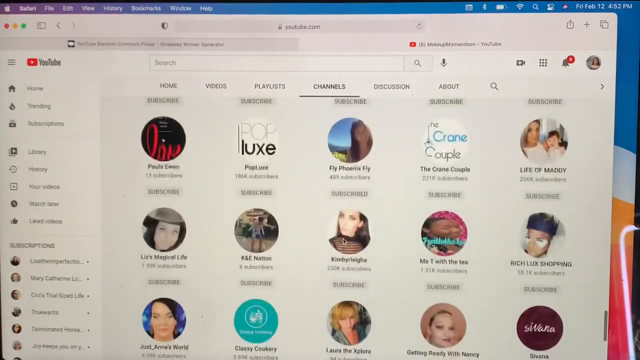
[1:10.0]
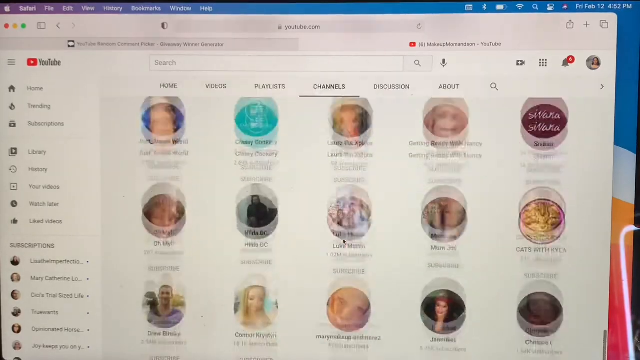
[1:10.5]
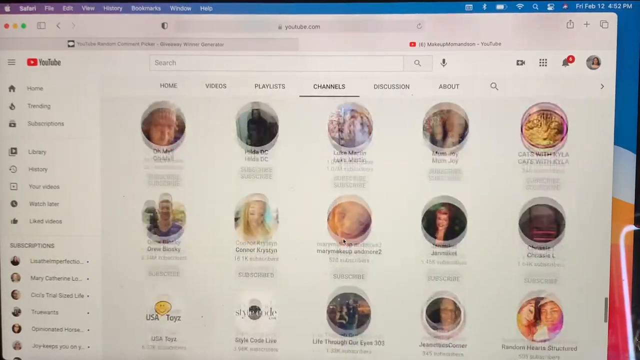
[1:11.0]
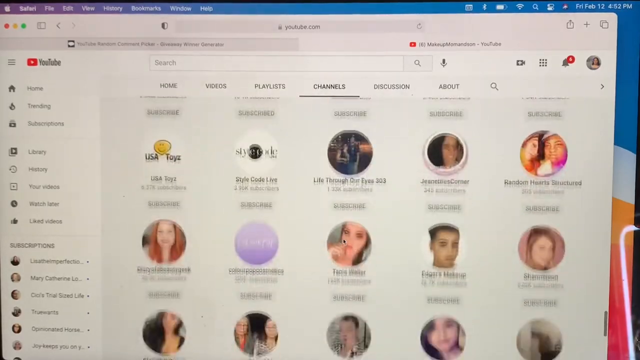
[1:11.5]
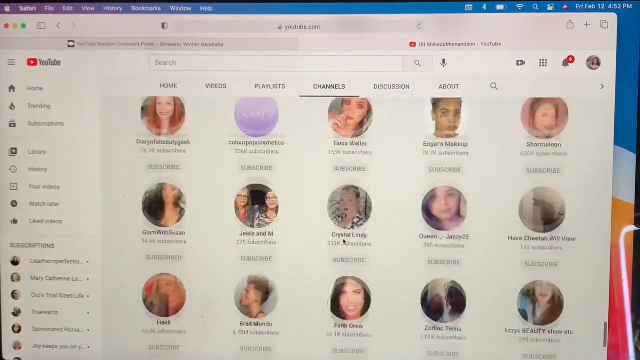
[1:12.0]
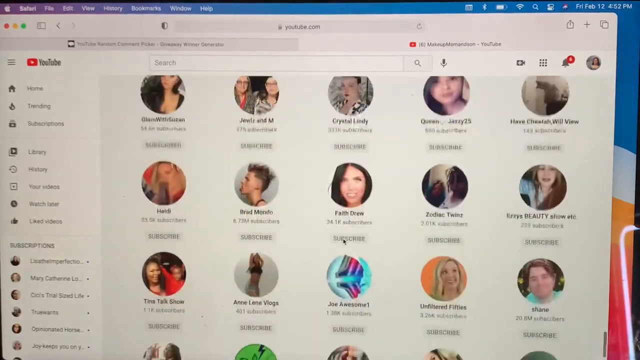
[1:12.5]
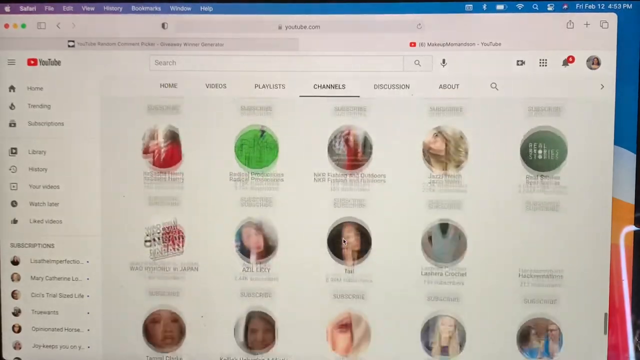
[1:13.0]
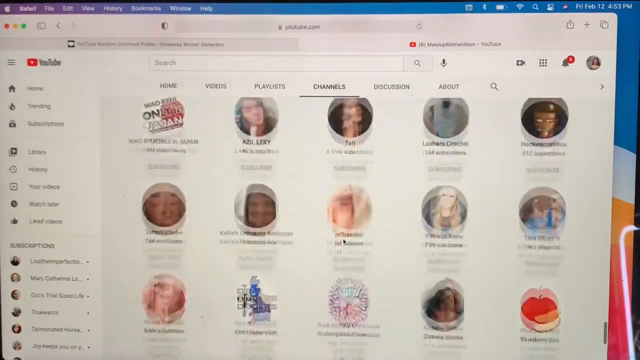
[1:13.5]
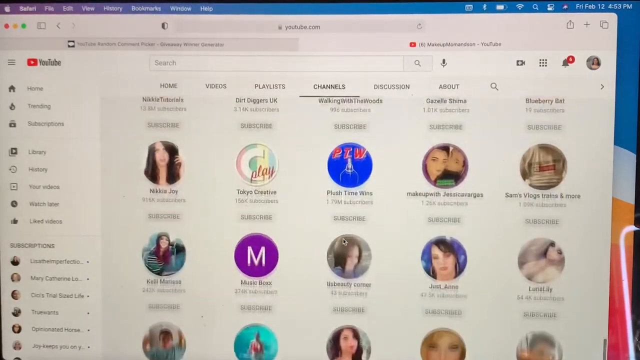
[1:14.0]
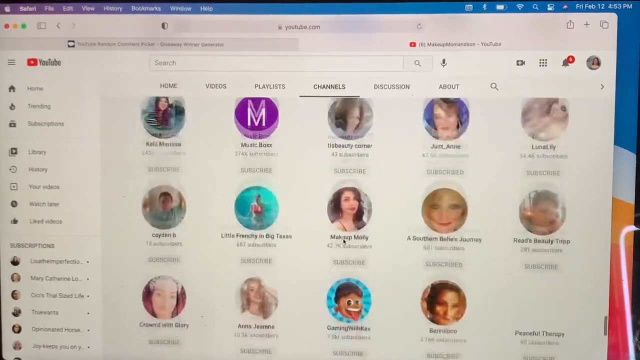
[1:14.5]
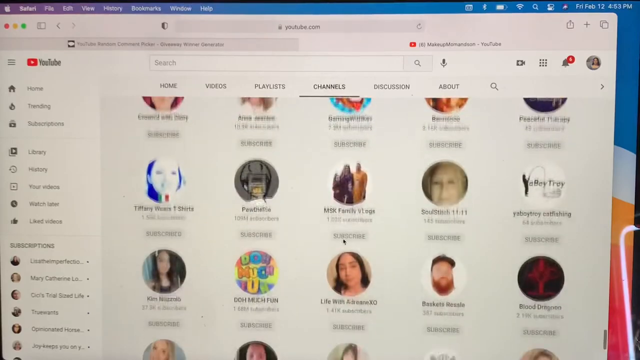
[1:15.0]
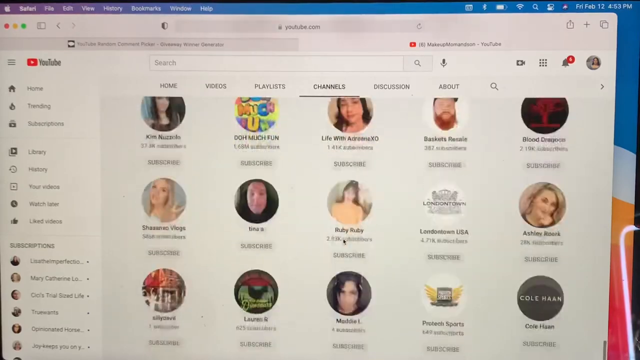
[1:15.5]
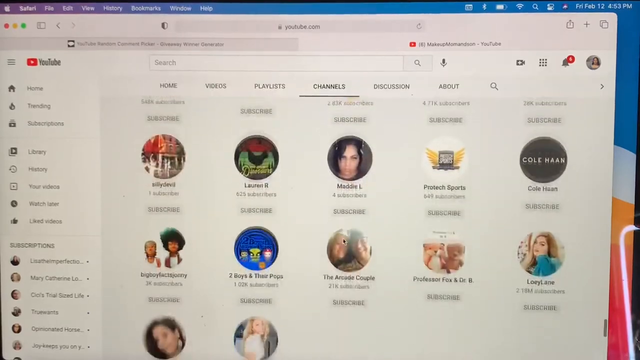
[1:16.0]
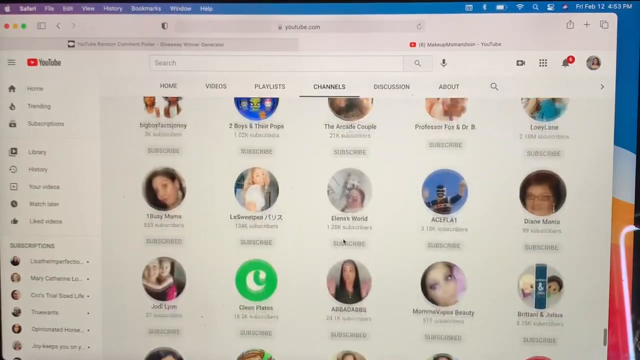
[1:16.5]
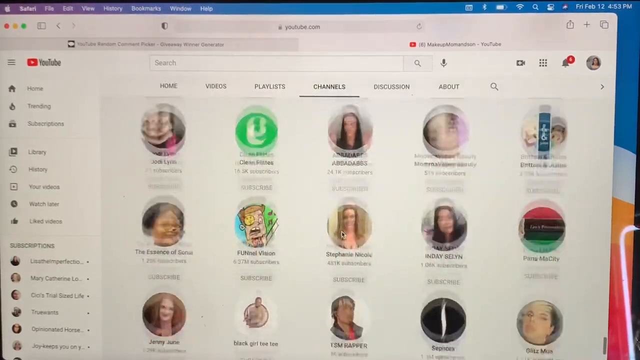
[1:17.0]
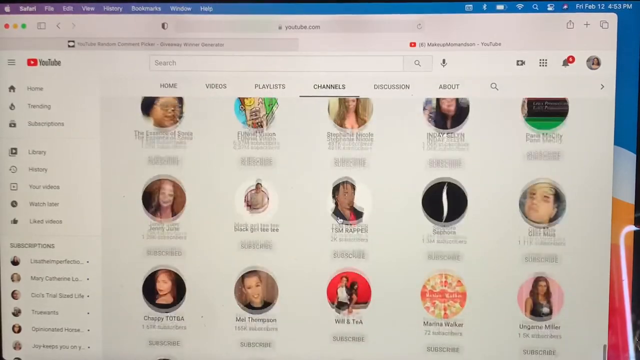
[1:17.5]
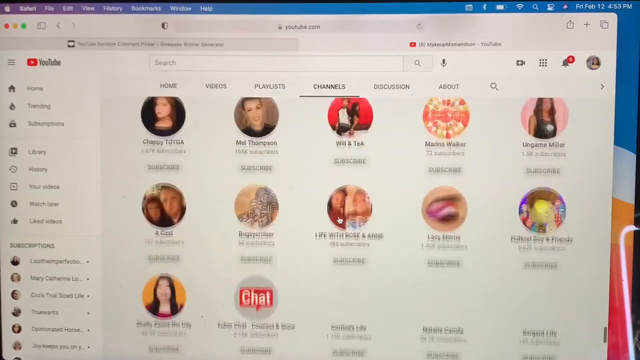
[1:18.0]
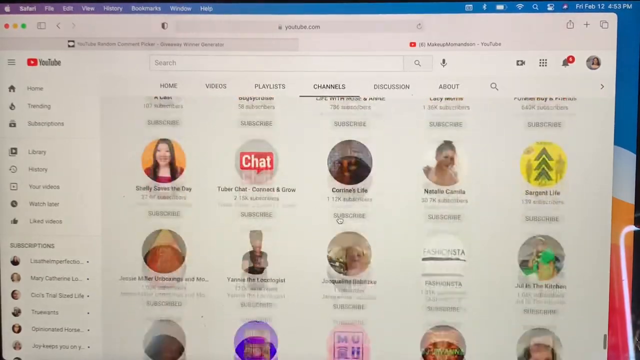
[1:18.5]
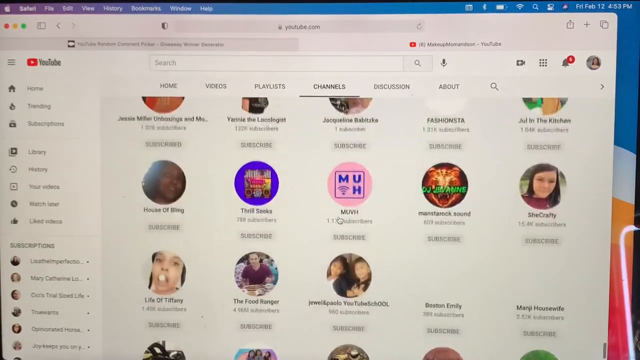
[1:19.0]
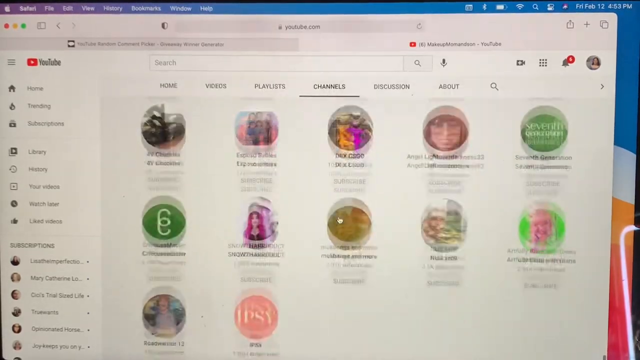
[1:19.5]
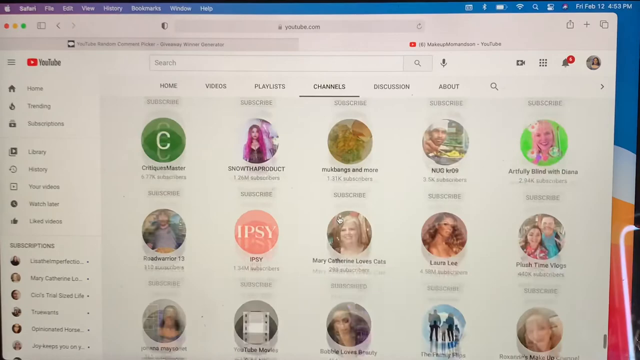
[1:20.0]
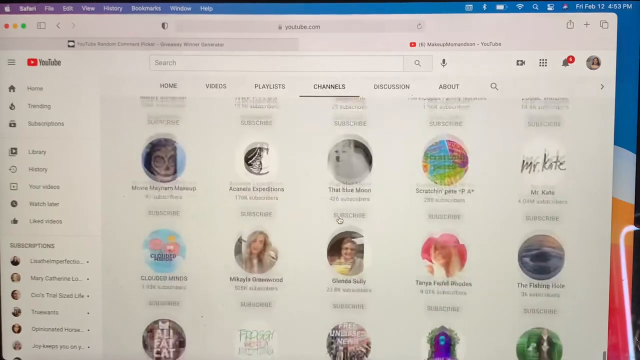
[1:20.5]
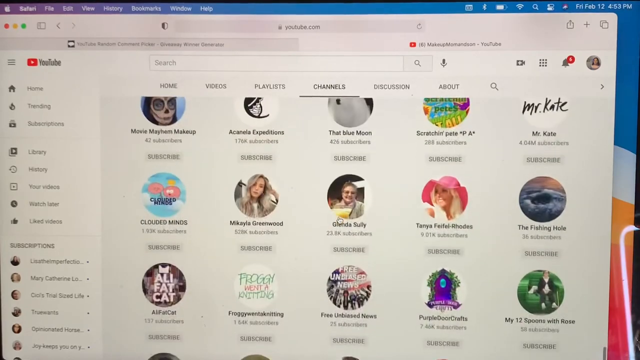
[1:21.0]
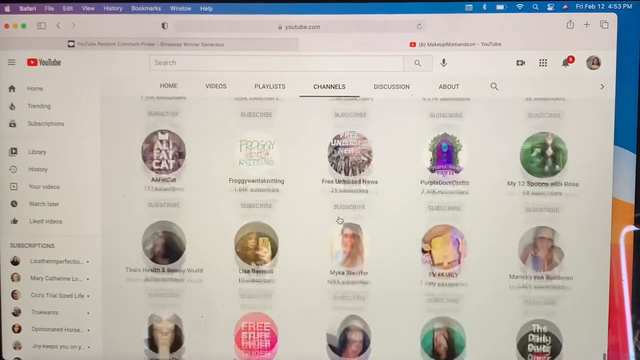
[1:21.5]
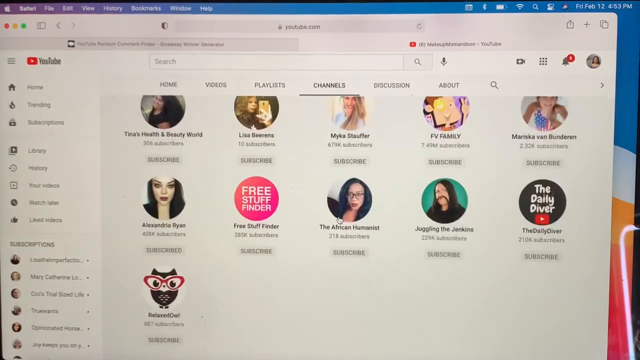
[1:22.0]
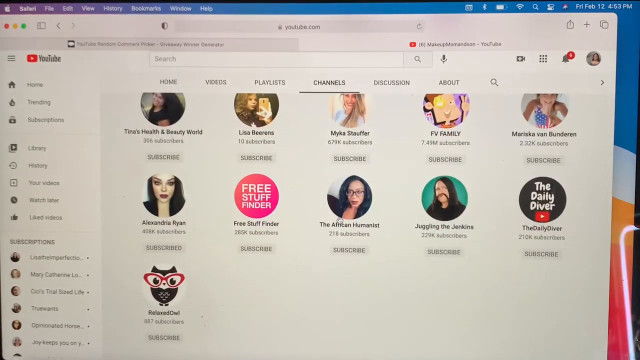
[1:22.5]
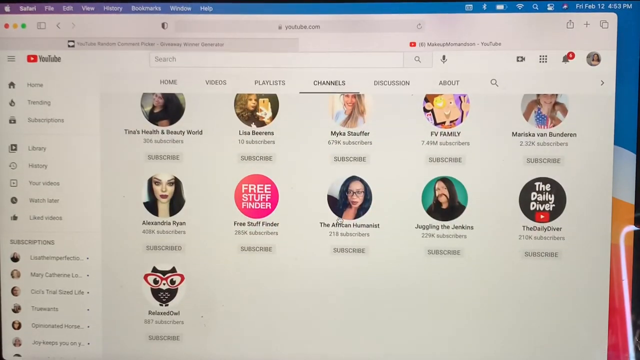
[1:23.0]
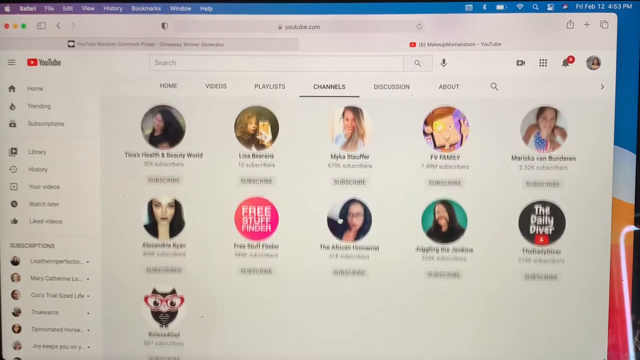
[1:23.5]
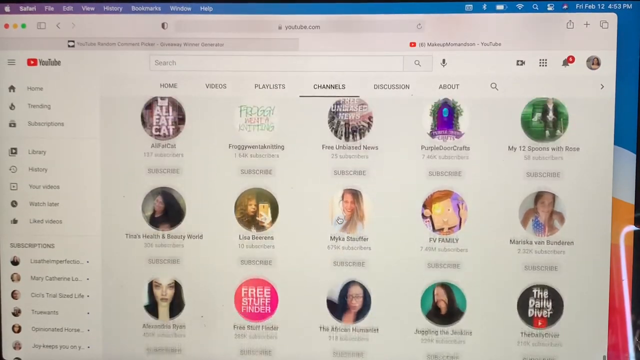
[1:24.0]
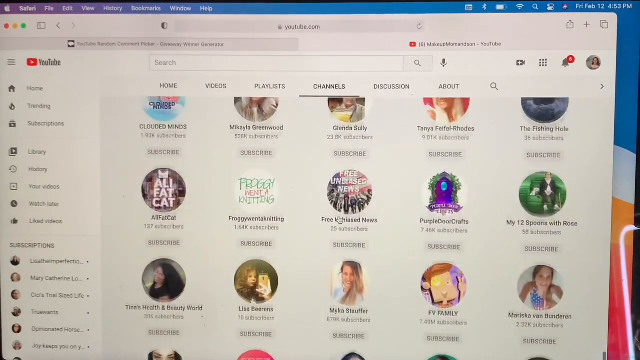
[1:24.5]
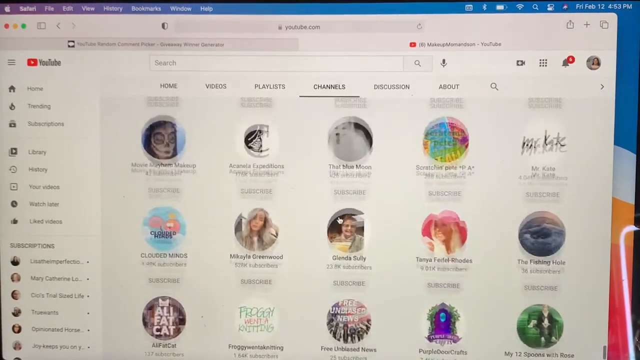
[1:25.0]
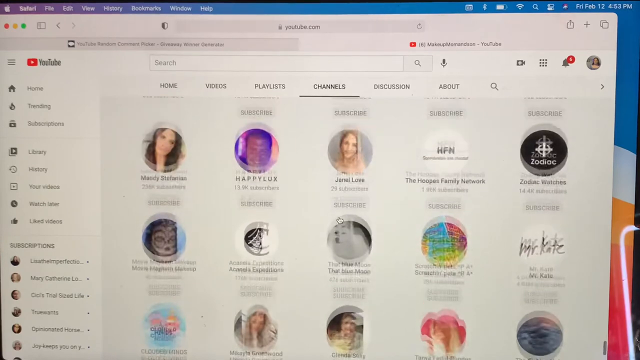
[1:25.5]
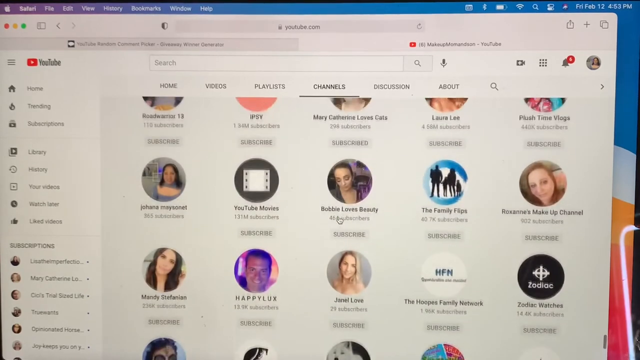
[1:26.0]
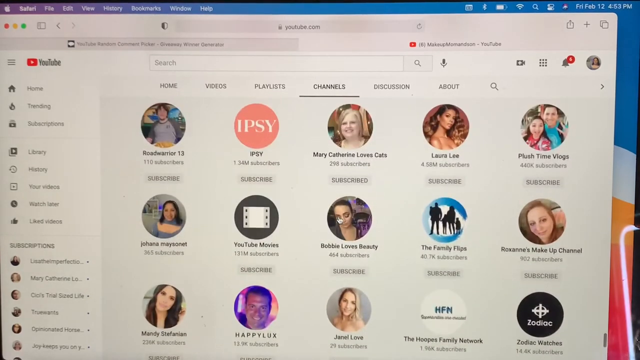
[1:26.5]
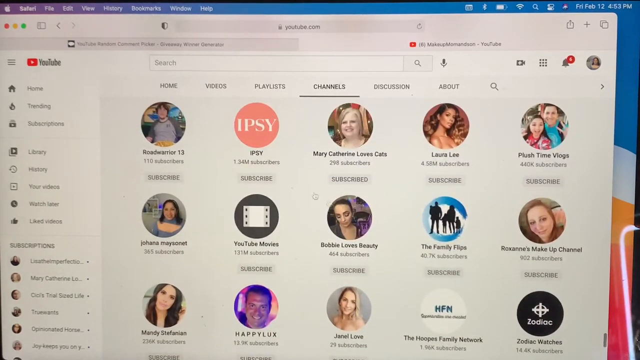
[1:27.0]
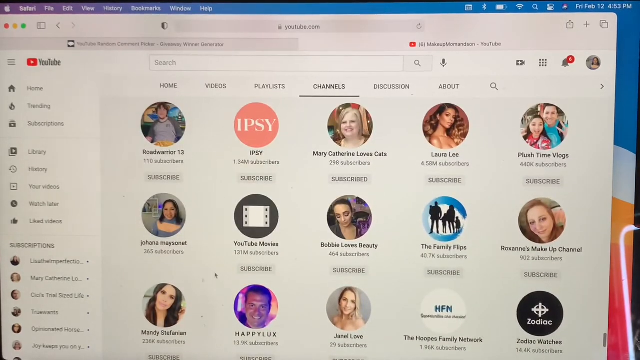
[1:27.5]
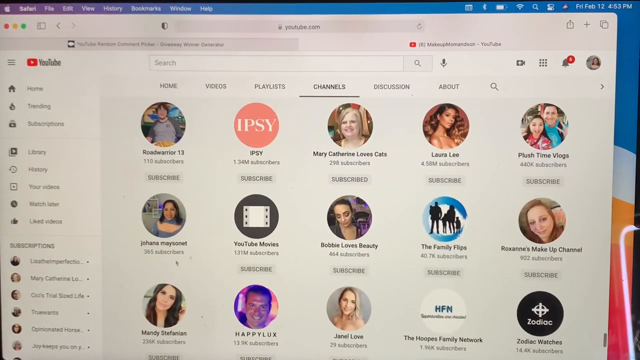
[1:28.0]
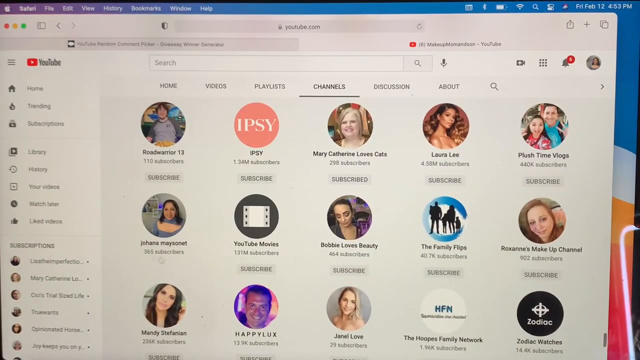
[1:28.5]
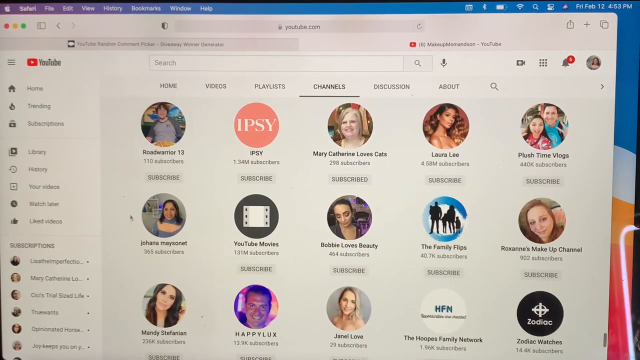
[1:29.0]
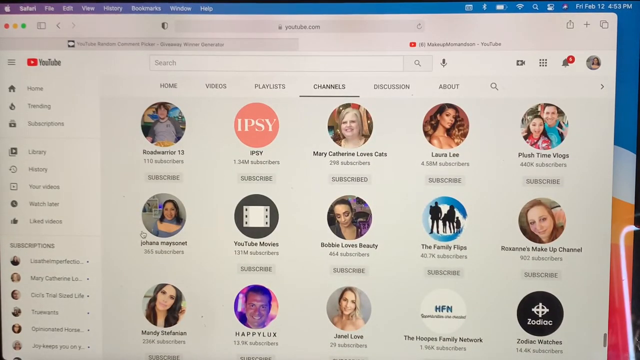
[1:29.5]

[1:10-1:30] A YouTube page is open on the Channels tab, with tabs for Home, Videos, Playlists, Channels, Discussion and About, apparently on an Apple device. The page scrolls down and down through the Channels tab, passing hundreds of channels with circular avatars. It keeps scrolling until it finally reaches the bottom, stops, and starts scrolling back up very slowly. One channel on the left side, at the very bottom, has a name that reads something like Joharta Mary's Bonnet, with 365 subscribers. The mouse cursor makes a counterclockwise circle around this channel.